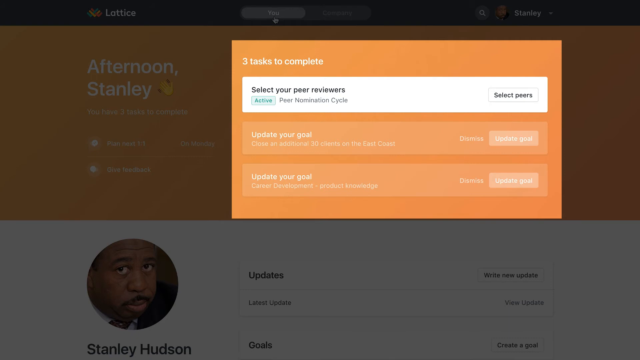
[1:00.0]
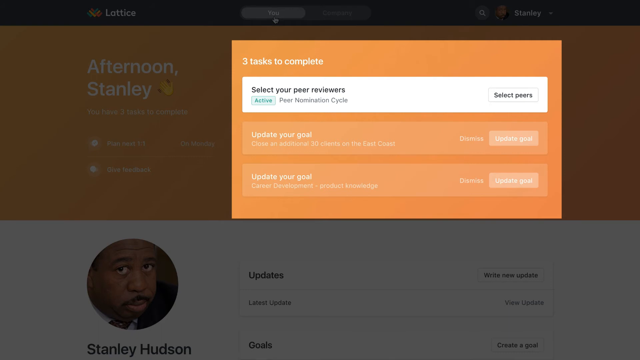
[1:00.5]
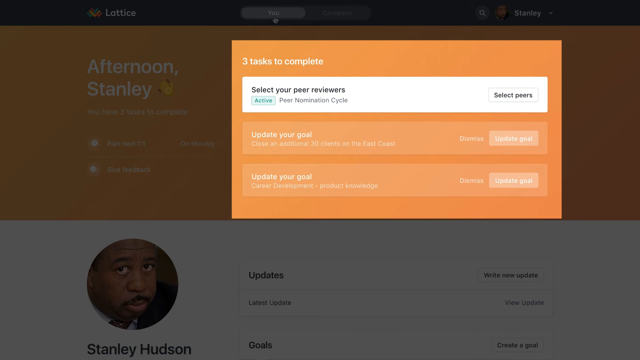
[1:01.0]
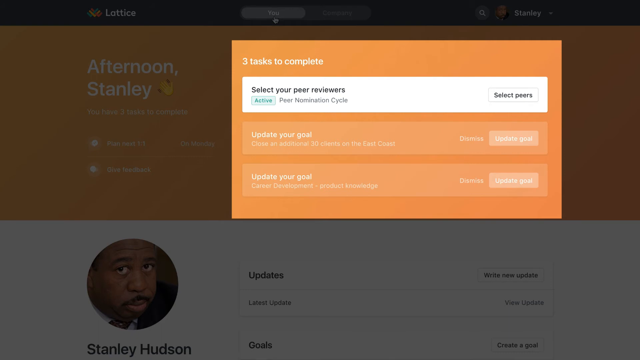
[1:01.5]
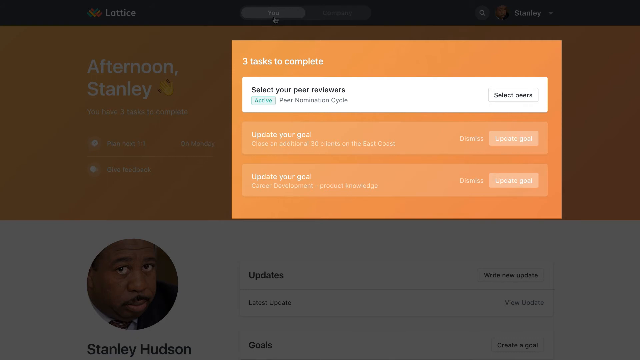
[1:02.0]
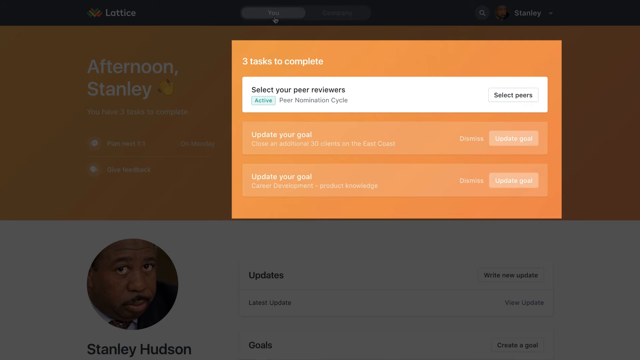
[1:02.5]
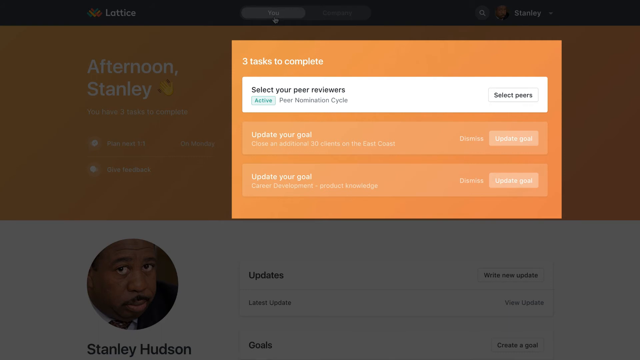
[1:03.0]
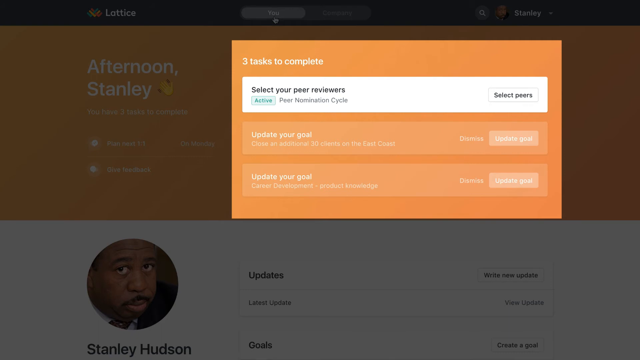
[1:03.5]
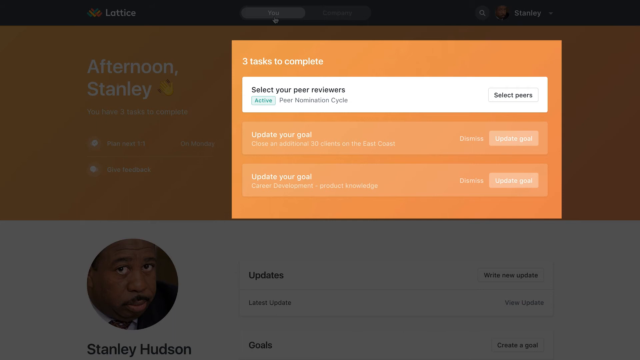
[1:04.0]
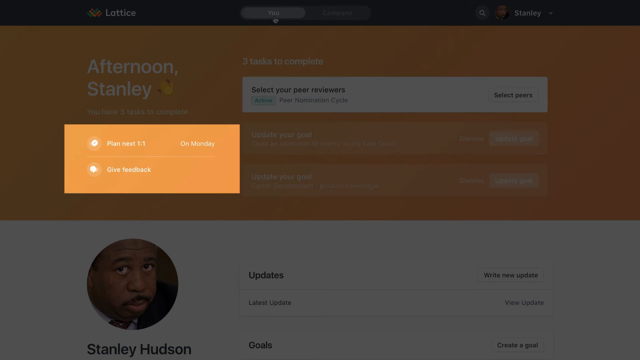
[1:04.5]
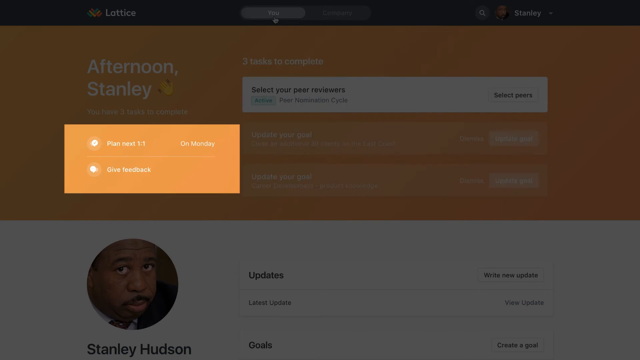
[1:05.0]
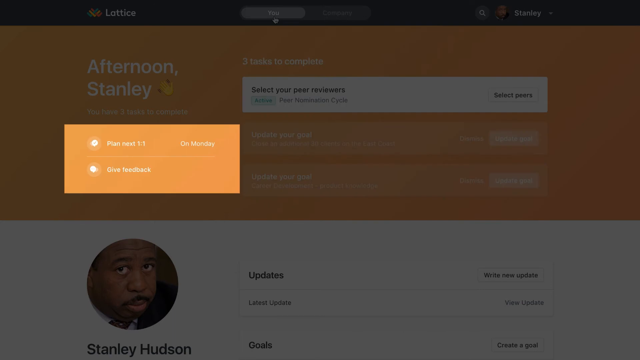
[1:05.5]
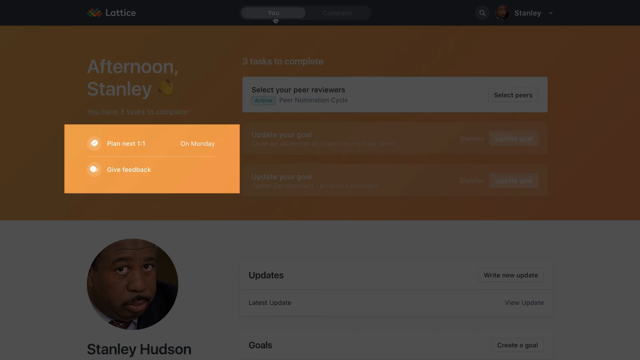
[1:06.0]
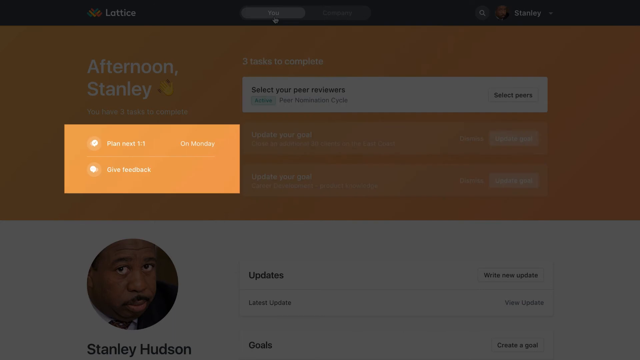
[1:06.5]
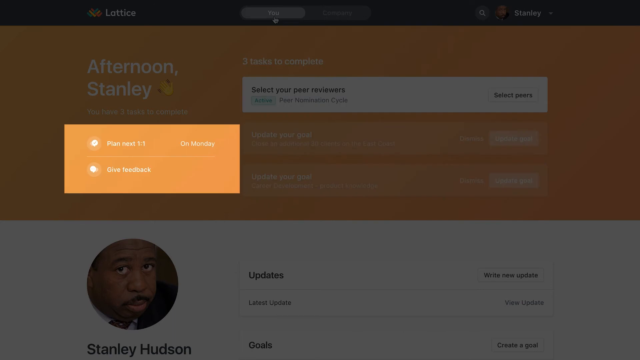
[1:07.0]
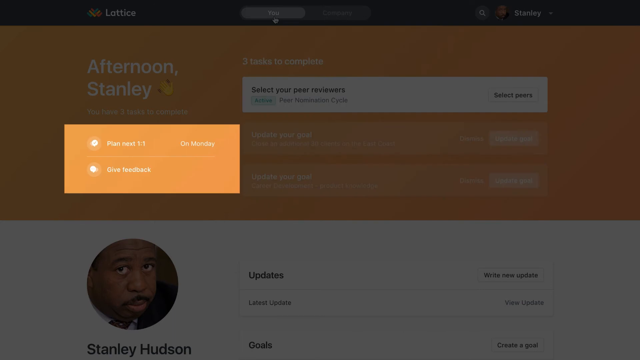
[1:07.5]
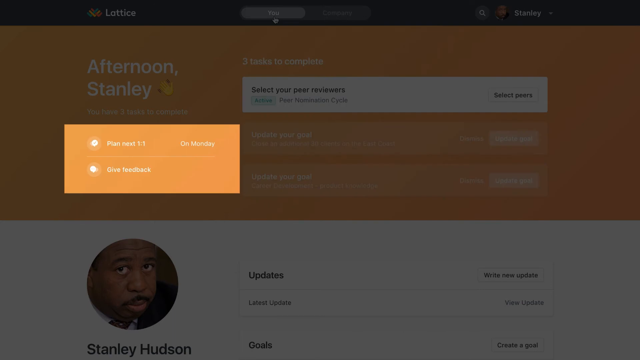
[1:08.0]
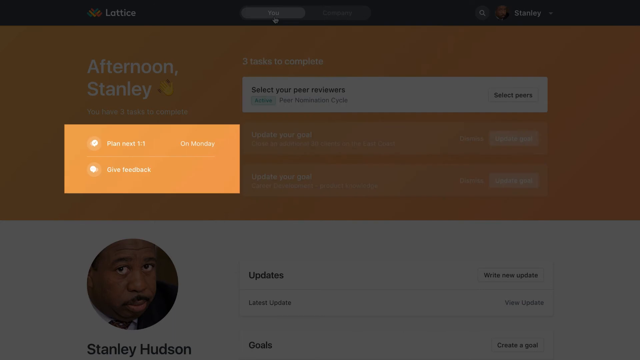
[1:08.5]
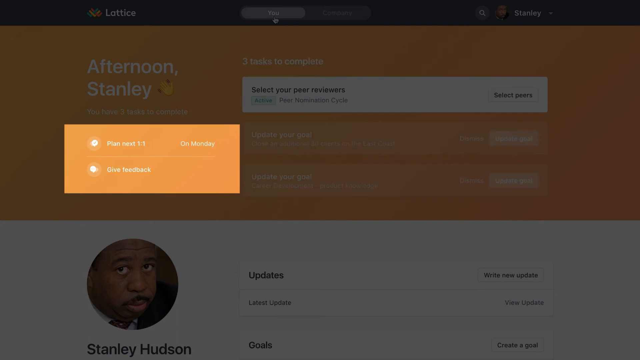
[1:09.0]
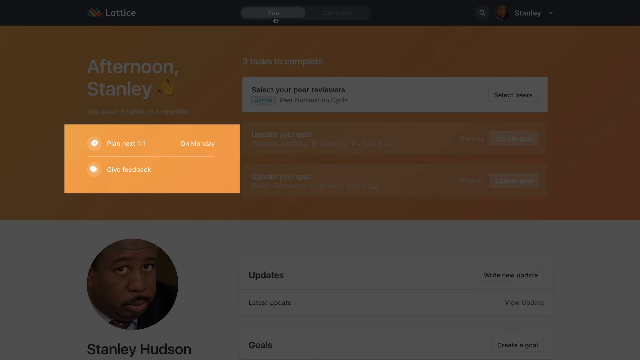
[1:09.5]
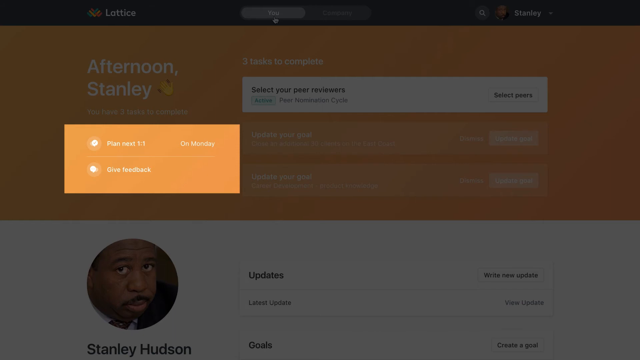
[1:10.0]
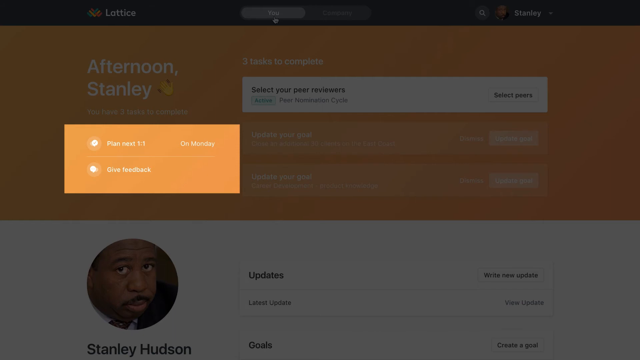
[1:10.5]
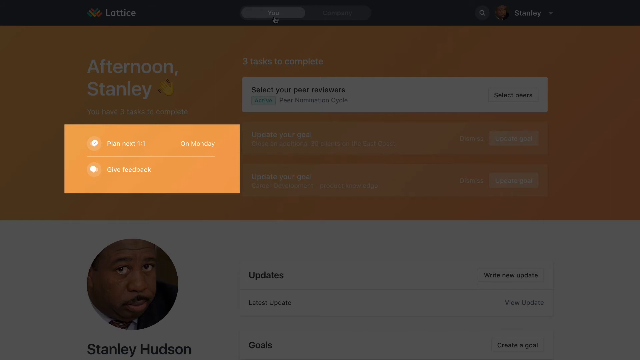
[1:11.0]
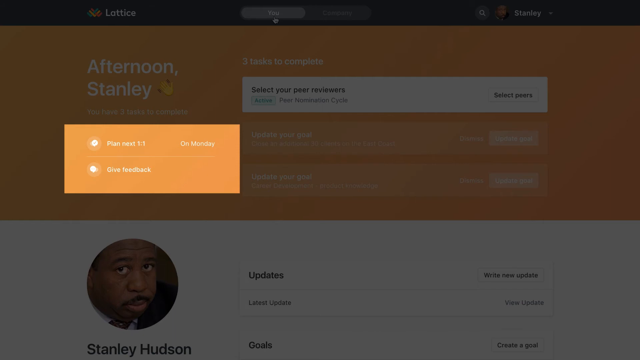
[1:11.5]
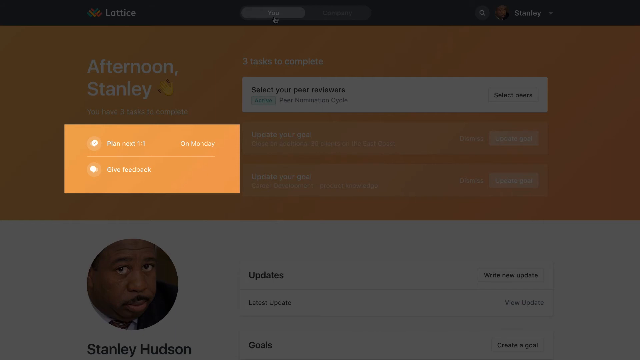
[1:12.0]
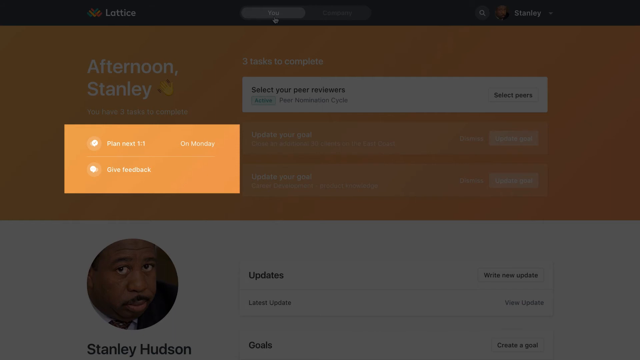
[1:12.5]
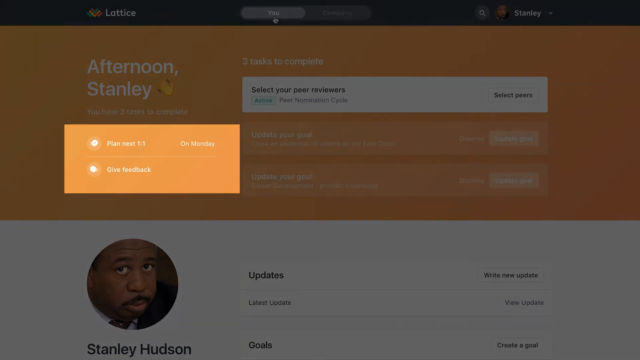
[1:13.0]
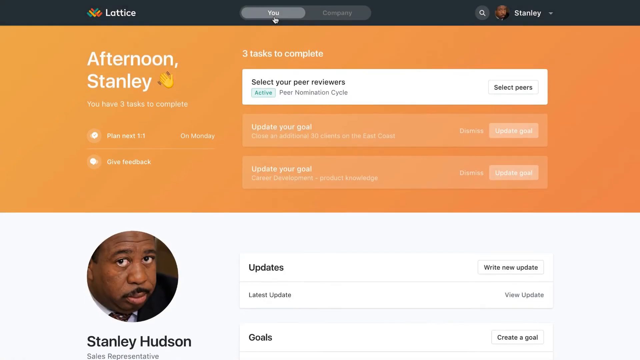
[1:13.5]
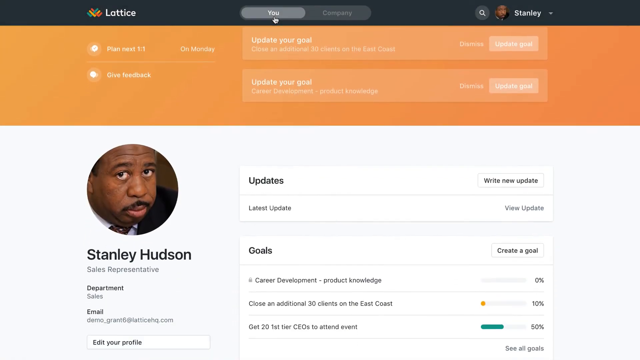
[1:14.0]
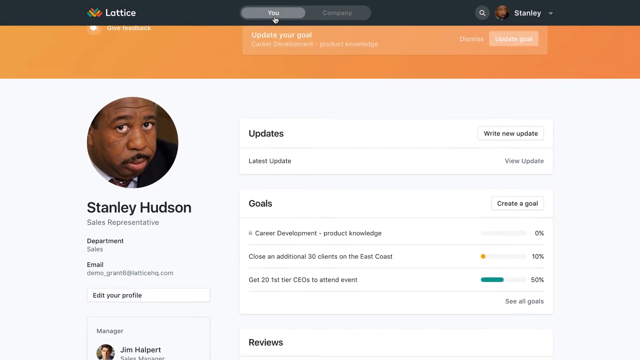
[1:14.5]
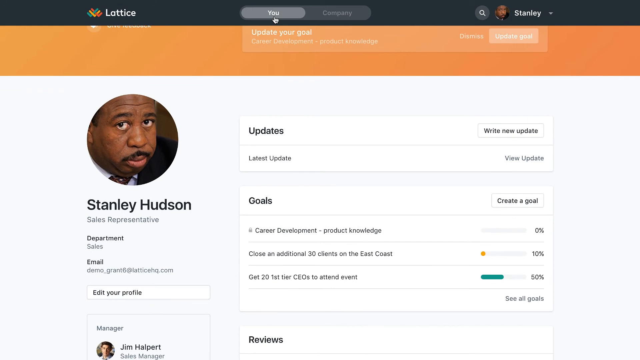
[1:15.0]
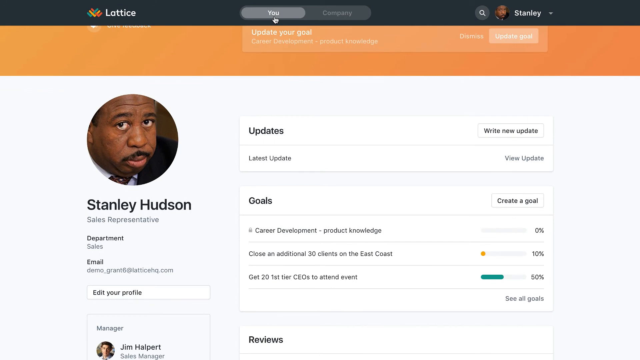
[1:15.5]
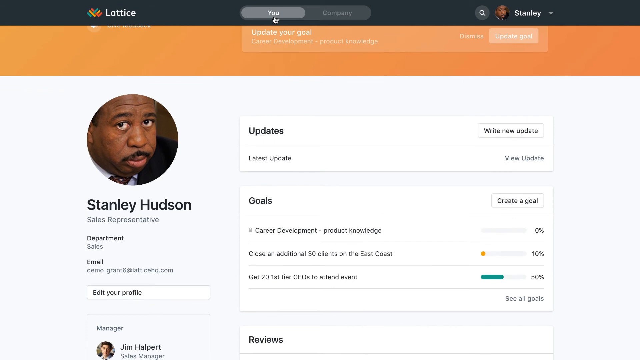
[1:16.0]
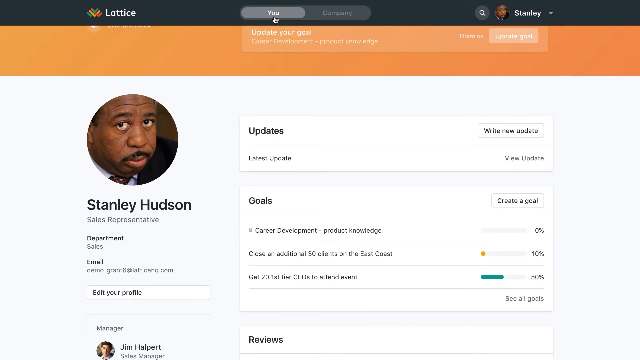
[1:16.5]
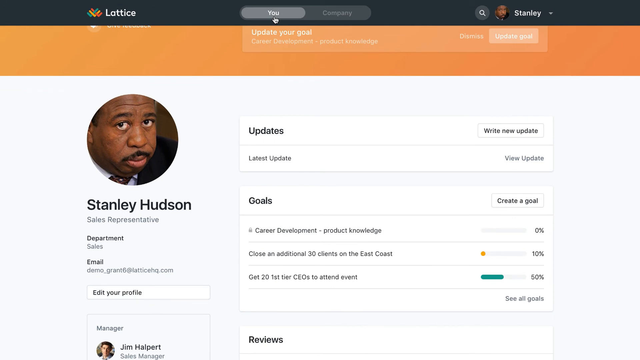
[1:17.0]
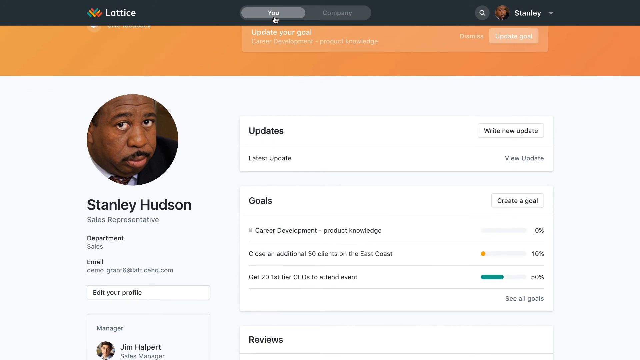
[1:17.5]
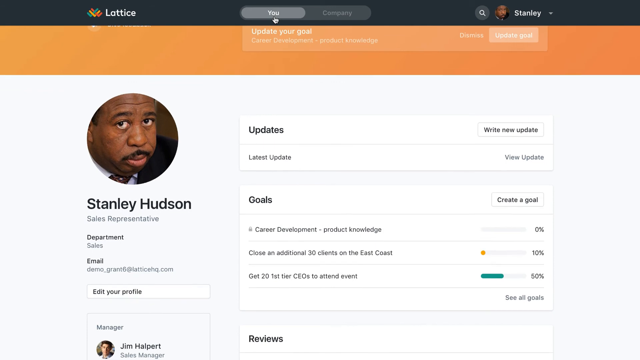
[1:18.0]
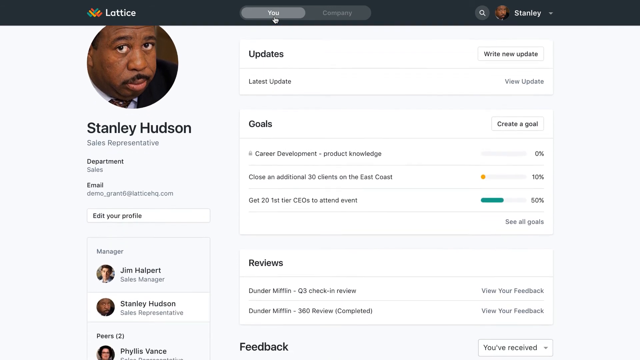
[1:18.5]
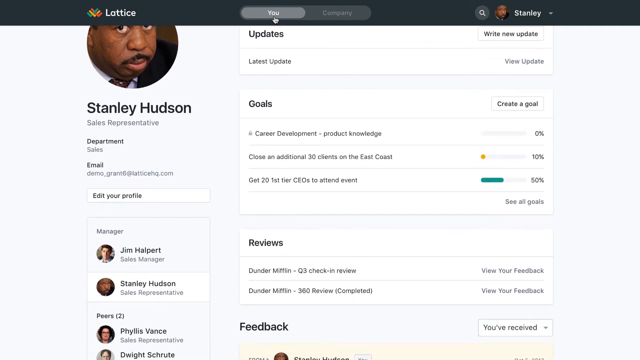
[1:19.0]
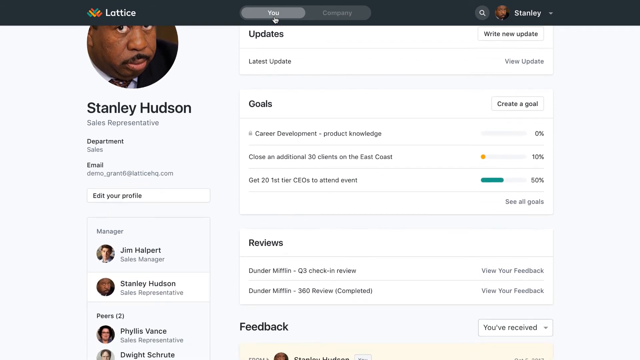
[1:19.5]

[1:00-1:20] The entire screen dims to a dark gray except for the section with the three tasks on the orange background; the greeting, the profile picture and everything around it are dimmed, highlighting "three tasks to complete." The highlight then moves to the section on the left containing two items, one reading "plan next one:one" and the other "give feedback," while the rest of the screen stays dimmed. The whole screen then becomes bright again as the dimmed areas are removed, and the page scrolls down. Stanley's name appears, with text stating he is a sales representative in the sales department. In the lower left it shows his manager, reading "manager" and "Jim Halpert," and below that "peers."